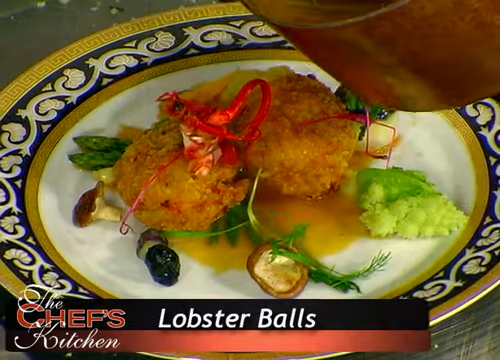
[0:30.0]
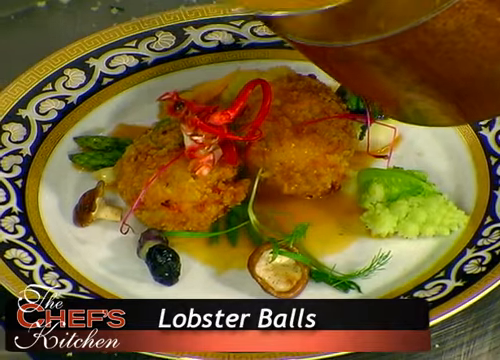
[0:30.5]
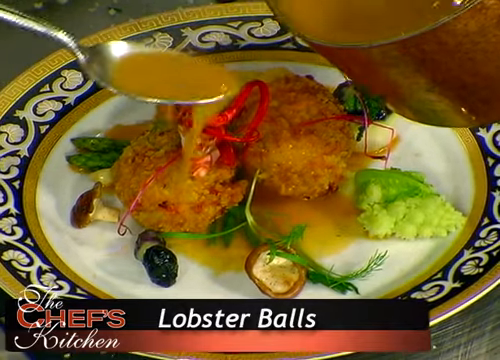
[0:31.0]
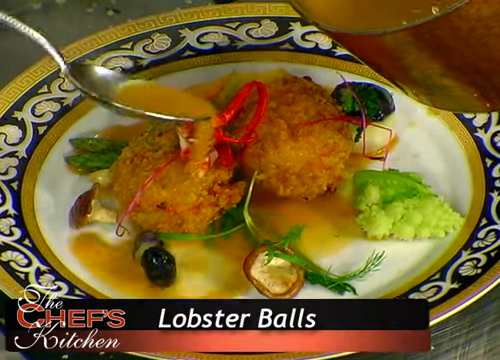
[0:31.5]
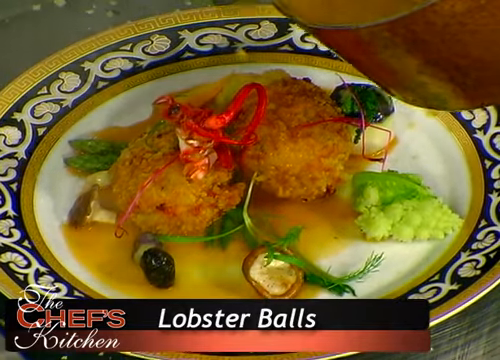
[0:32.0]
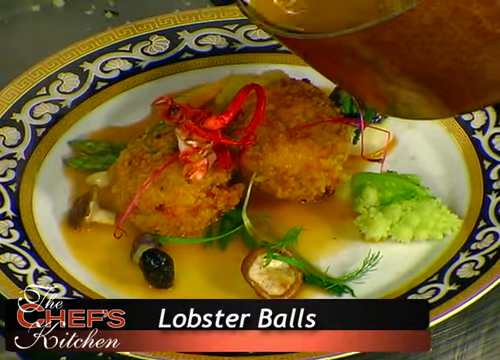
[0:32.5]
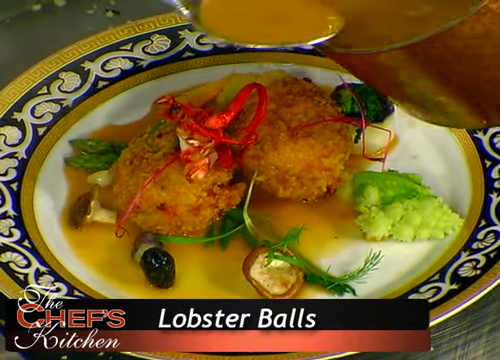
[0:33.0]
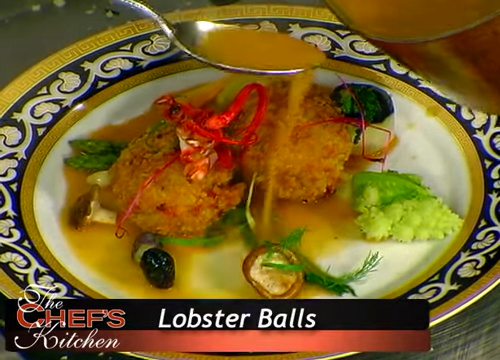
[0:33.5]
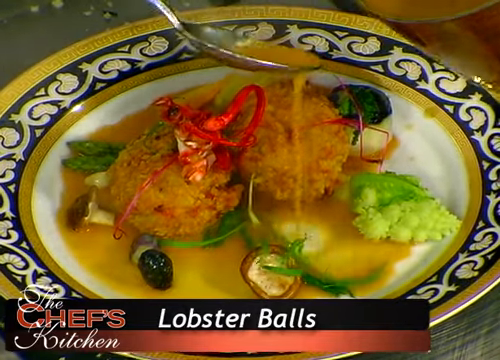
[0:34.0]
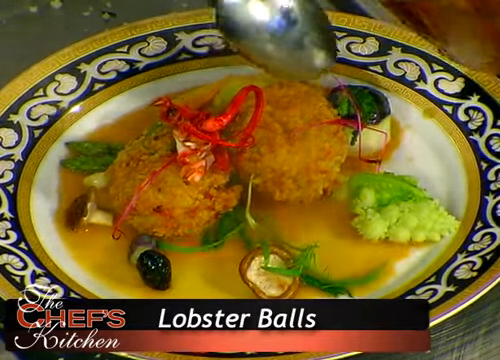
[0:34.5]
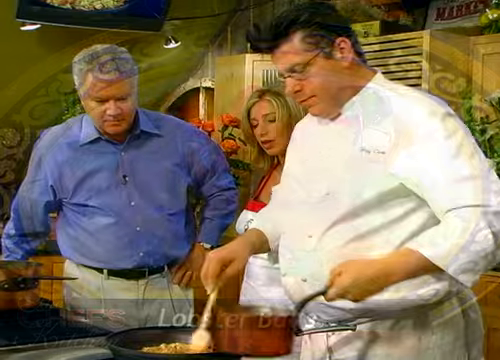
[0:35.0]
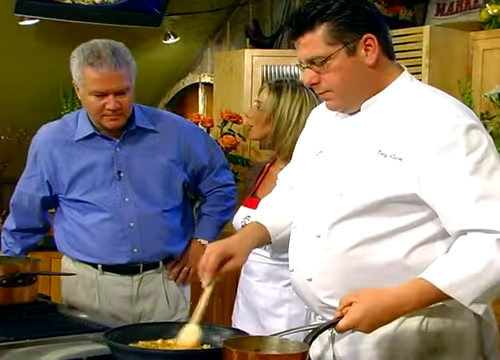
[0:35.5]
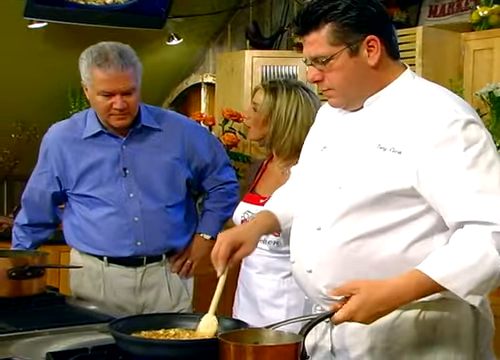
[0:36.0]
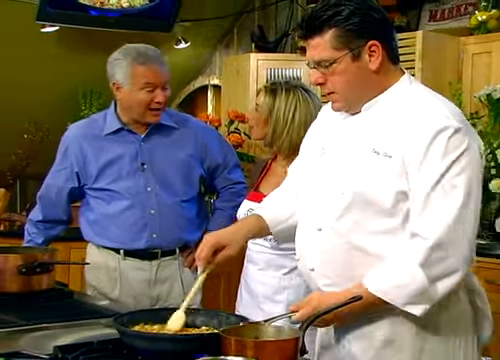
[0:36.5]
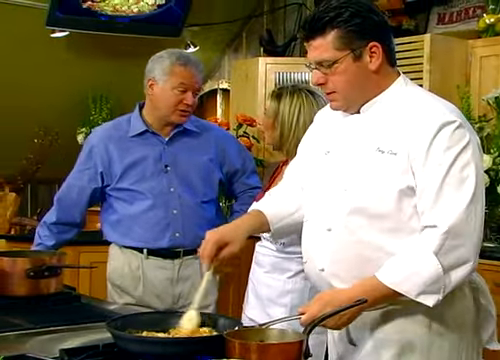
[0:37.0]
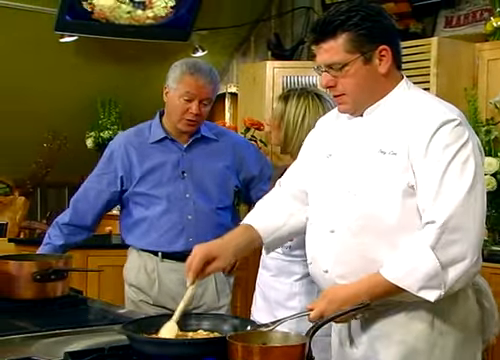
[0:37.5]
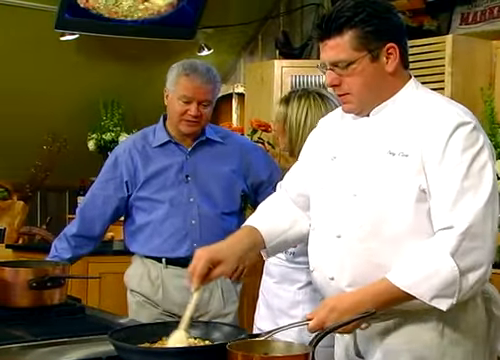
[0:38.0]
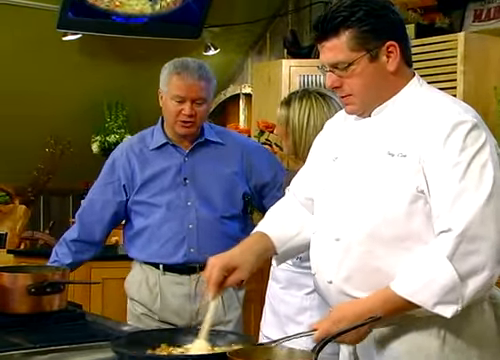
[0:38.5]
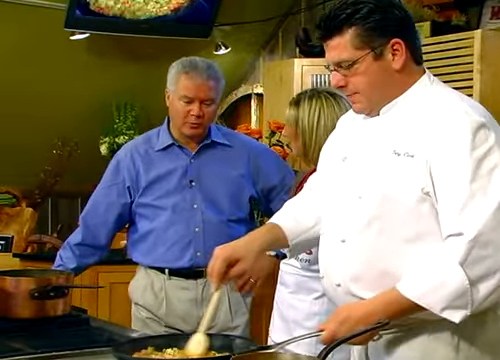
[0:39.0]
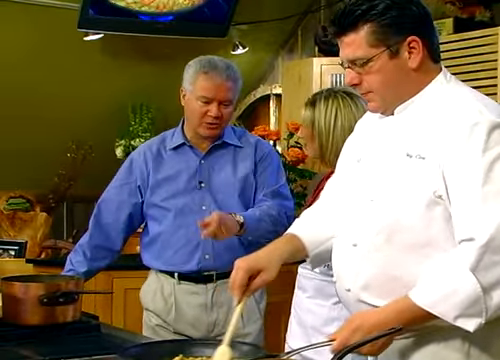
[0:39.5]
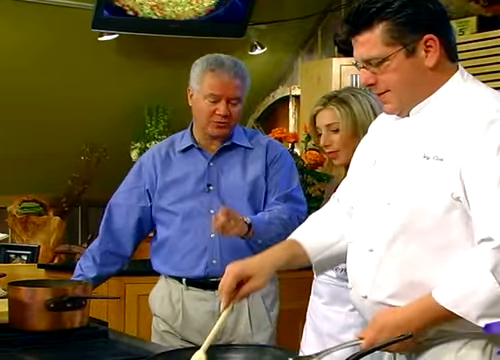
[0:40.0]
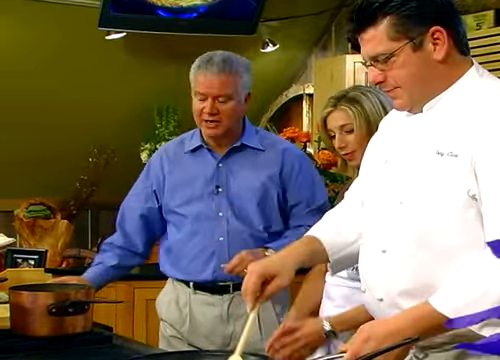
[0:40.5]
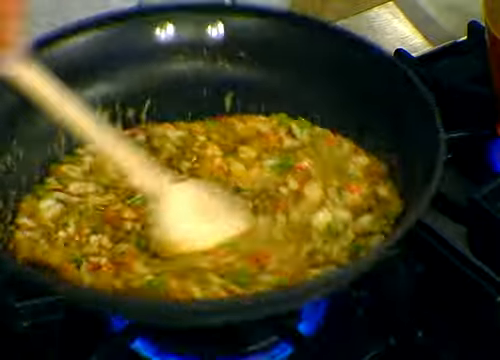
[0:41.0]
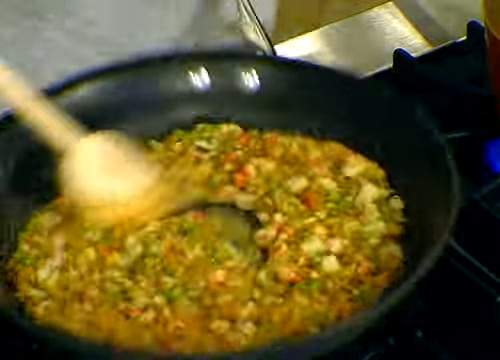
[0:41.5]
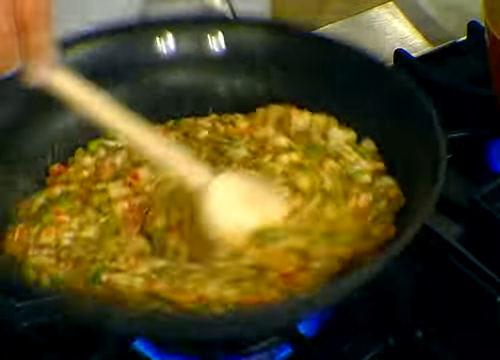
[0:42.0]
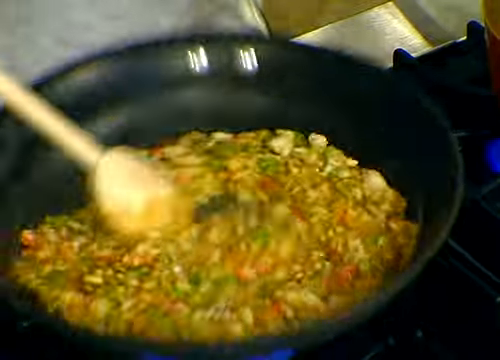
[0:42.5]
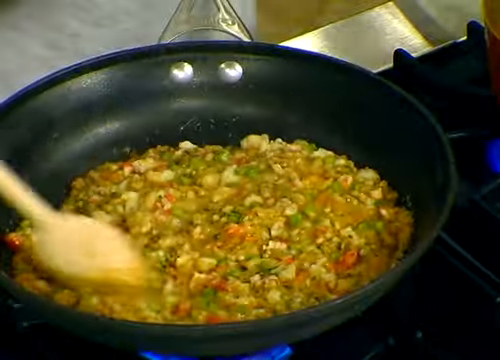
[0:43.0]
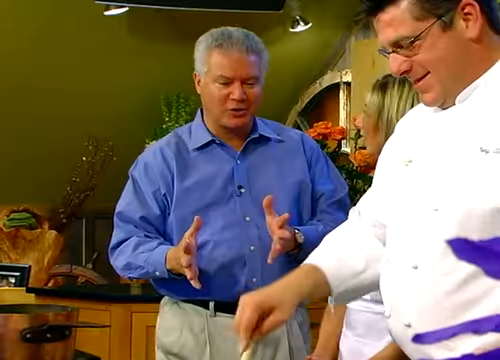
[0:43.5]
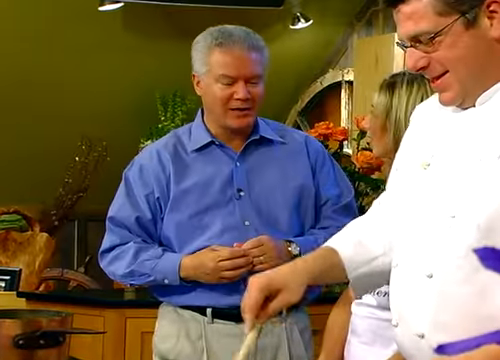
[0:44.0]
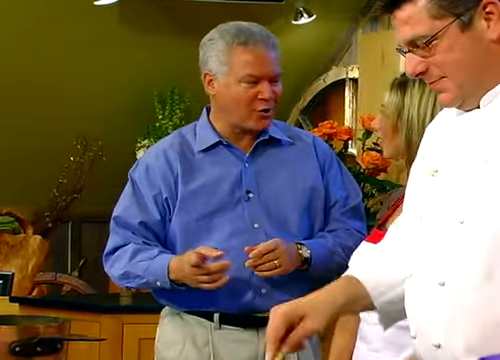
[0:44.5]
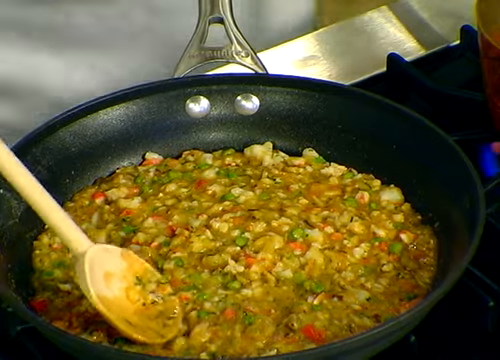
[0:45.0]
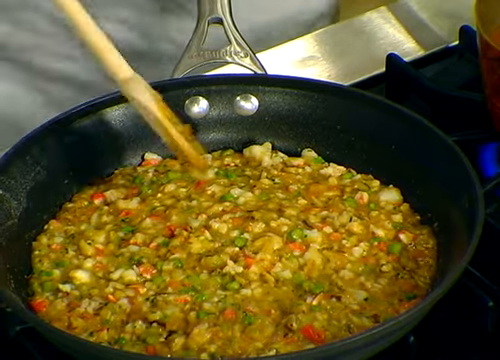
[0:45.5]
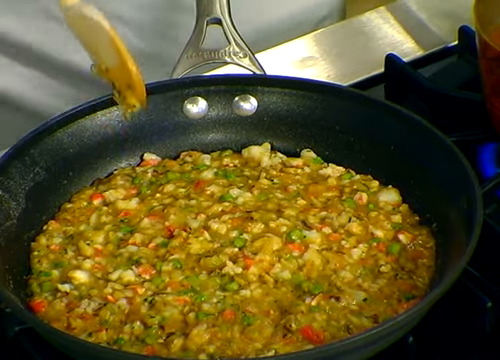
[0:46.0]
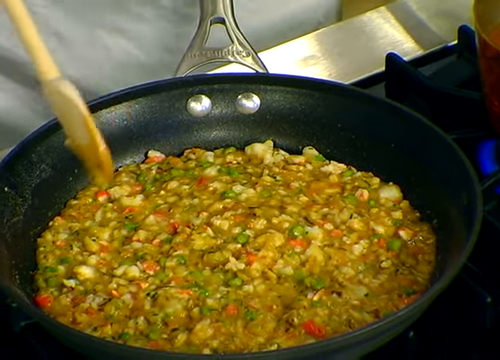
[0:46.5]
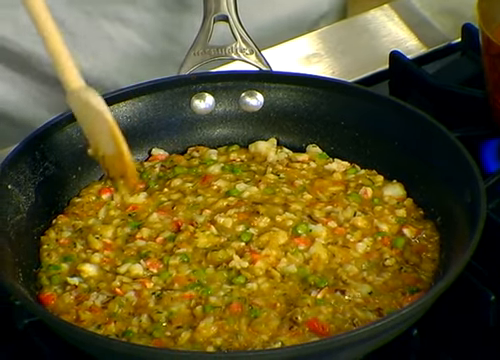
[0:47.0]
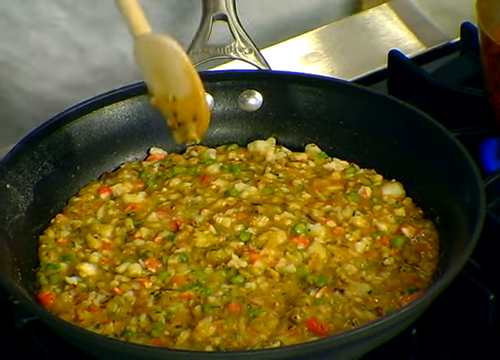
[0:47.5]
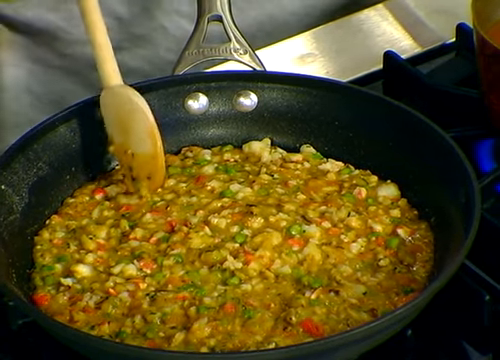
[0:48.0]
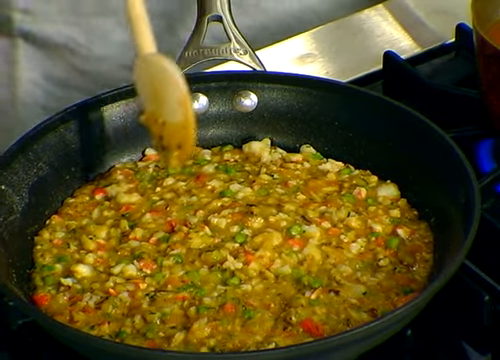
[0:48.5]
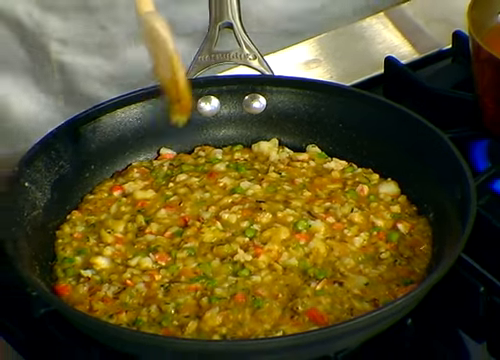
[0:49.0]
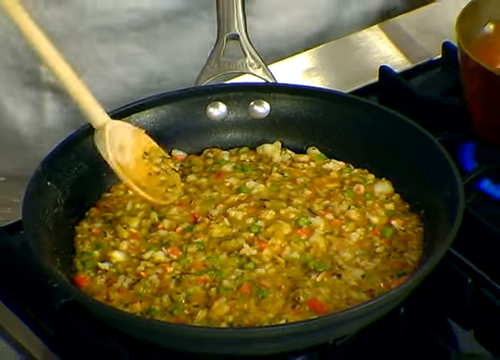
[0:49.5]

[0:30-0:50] Some kind of unidentified meal is on a plate with a blue, white and gold outline. It apparently consists of lobster balls, with some kind of greens on the plate. The chef sprinkles something on it, spooning a gravy-type thing out of a pan so that it kind of covers the food. He mixes the dish with a wooden spoon. He wears a chef outfit and has glasses in the back. Something says "Martin." A TV is up in the corner with two lights hanging down off its side. The woman and the man in khaki pants are conversing. The chef stirs the stuff in the bowl, with the spoon down in it, while one man seems to explain it to him. In the pot itself there appear to be maybe some celery and onions as he prepares the dish.